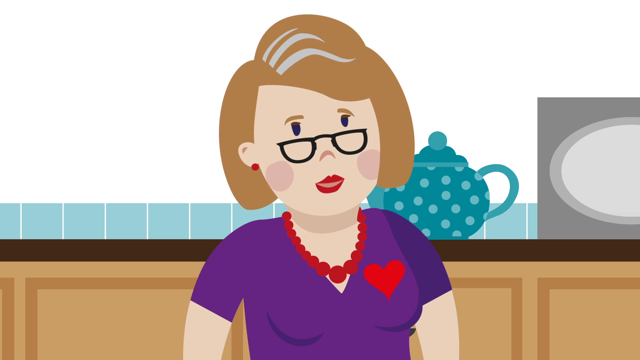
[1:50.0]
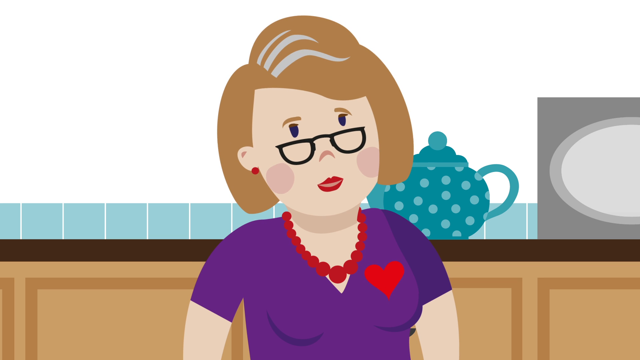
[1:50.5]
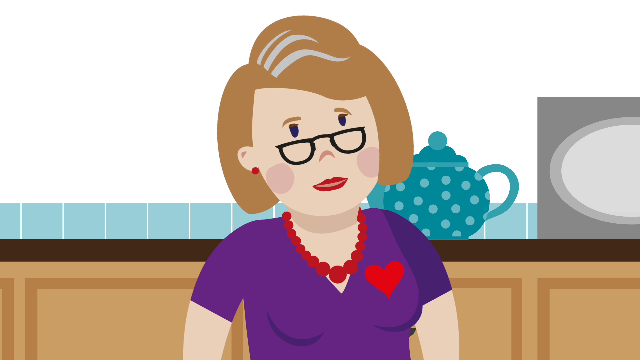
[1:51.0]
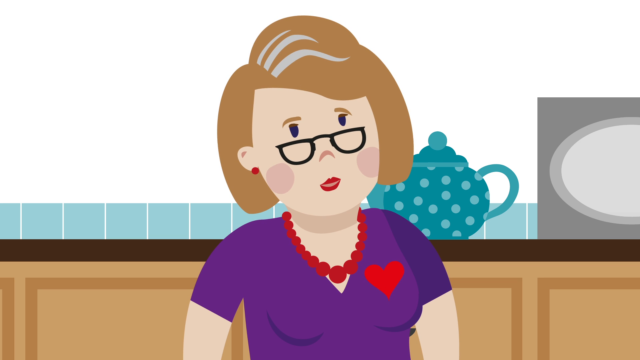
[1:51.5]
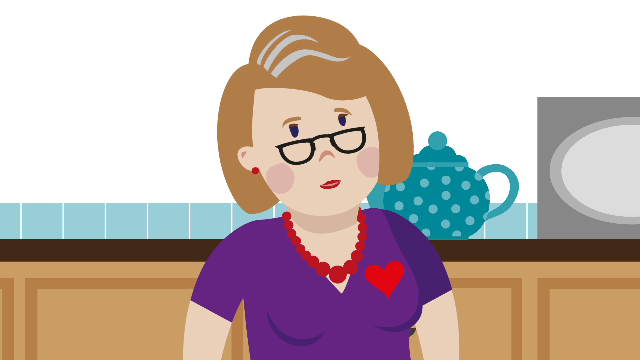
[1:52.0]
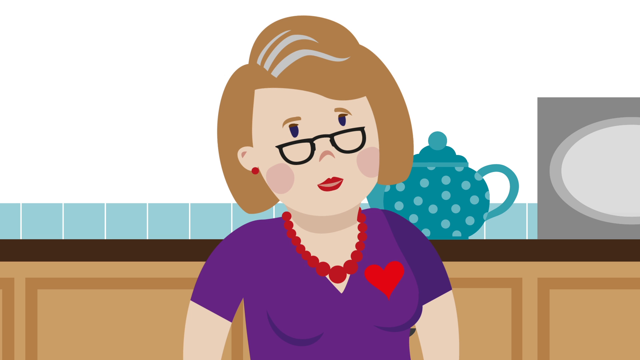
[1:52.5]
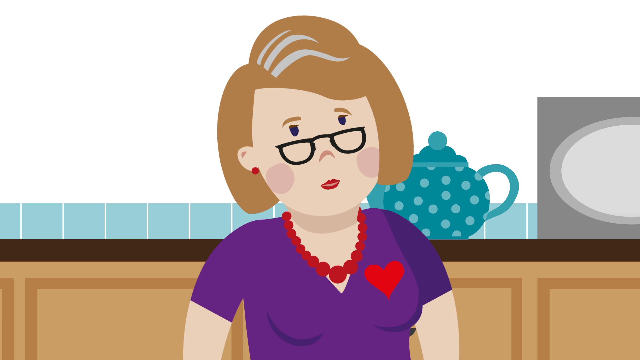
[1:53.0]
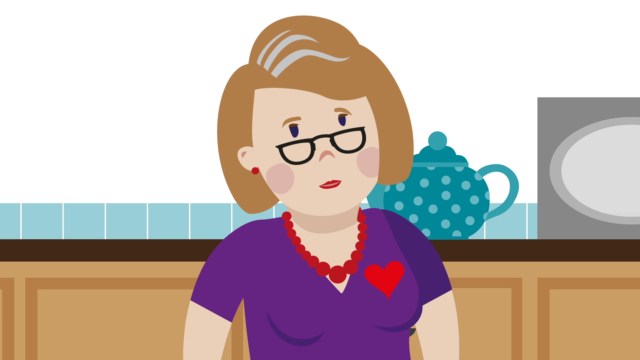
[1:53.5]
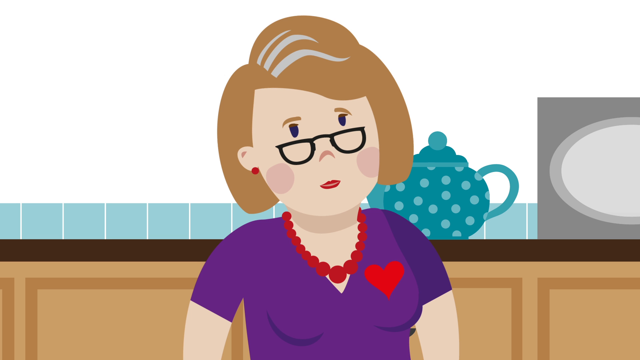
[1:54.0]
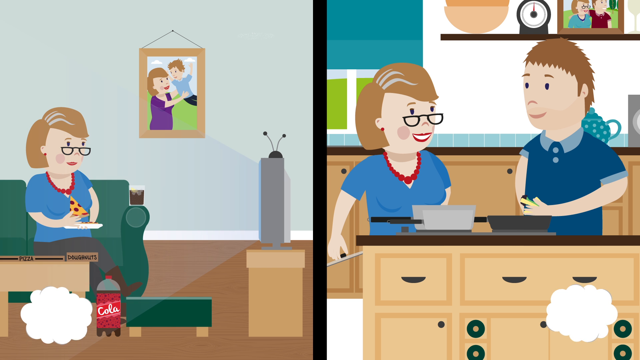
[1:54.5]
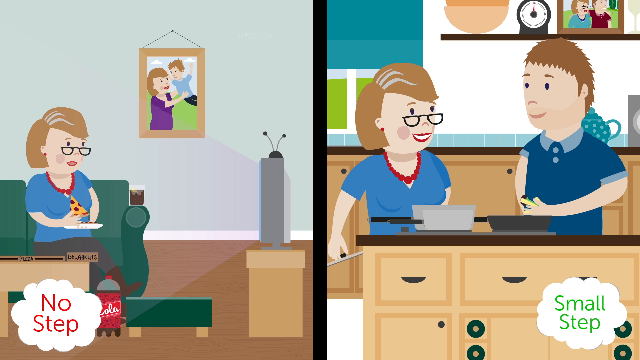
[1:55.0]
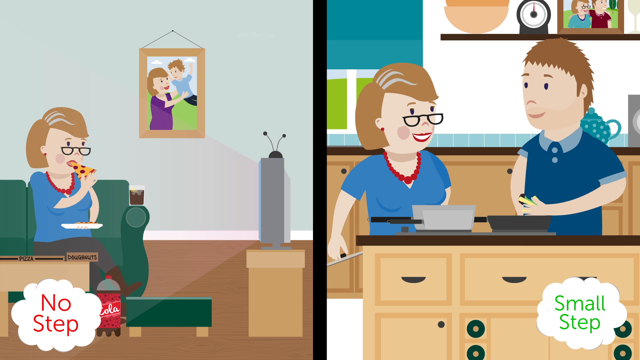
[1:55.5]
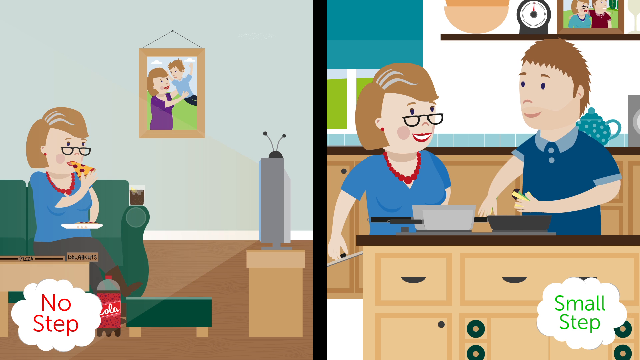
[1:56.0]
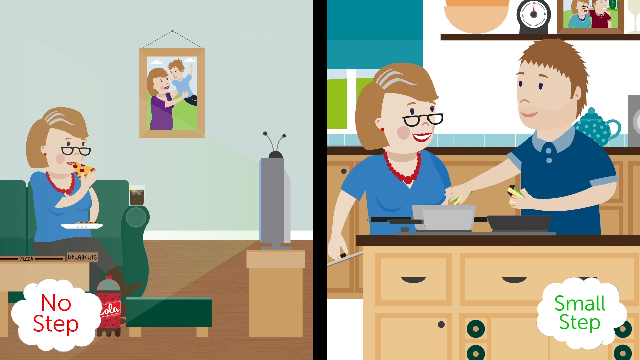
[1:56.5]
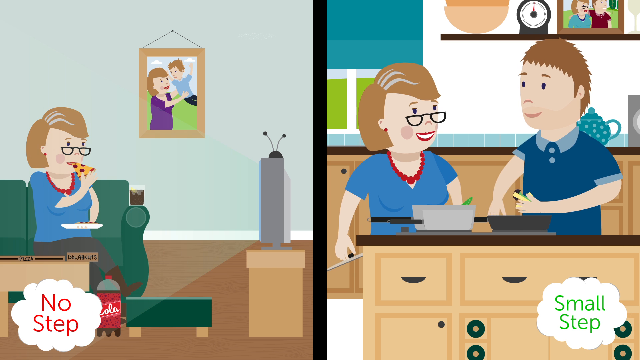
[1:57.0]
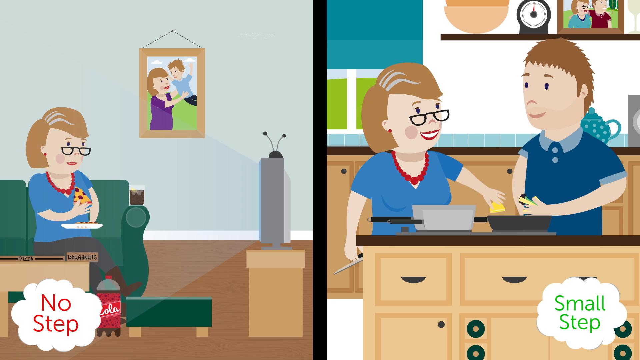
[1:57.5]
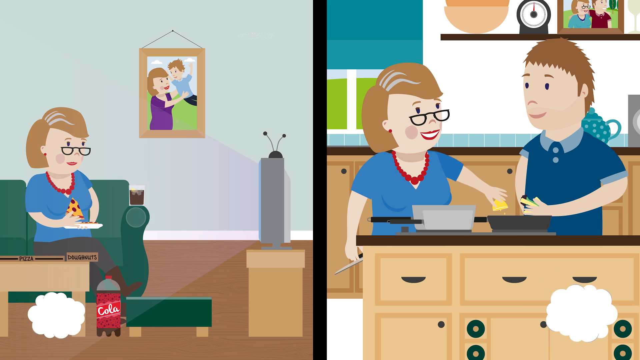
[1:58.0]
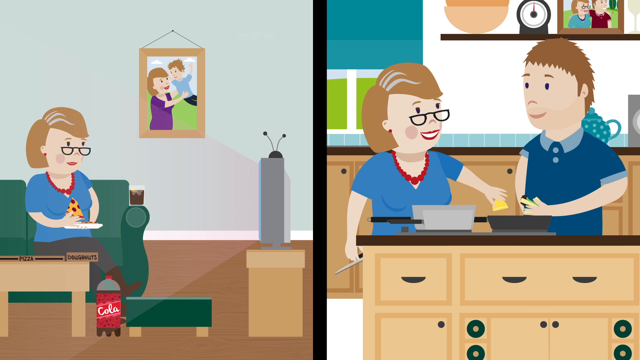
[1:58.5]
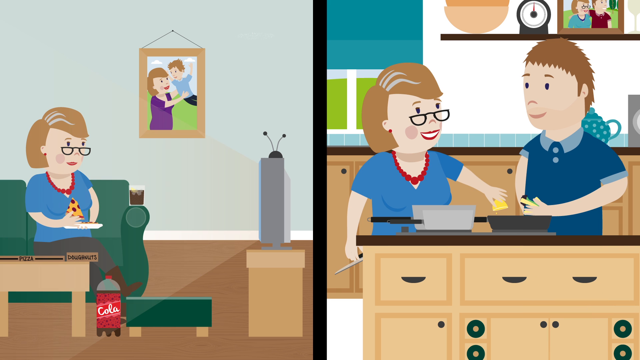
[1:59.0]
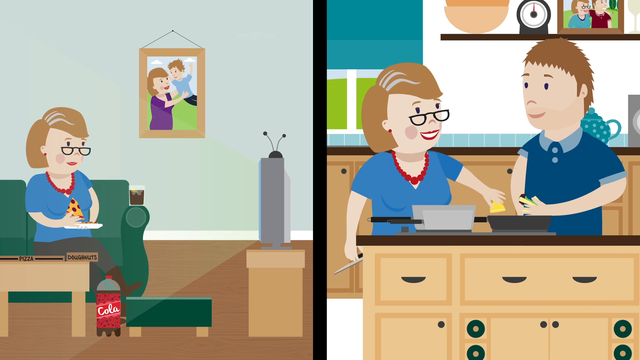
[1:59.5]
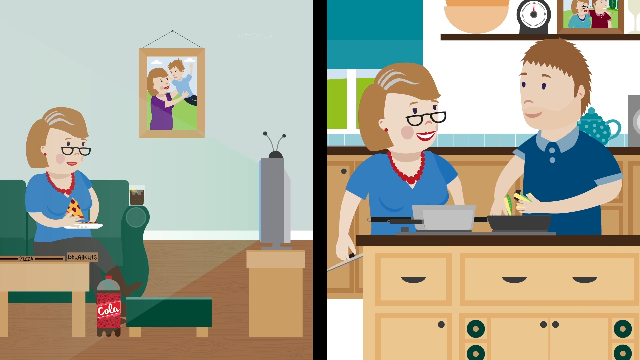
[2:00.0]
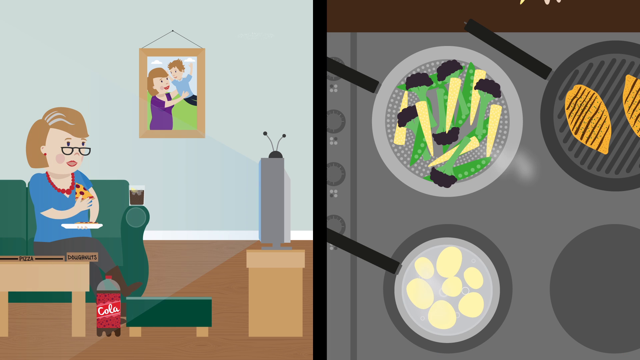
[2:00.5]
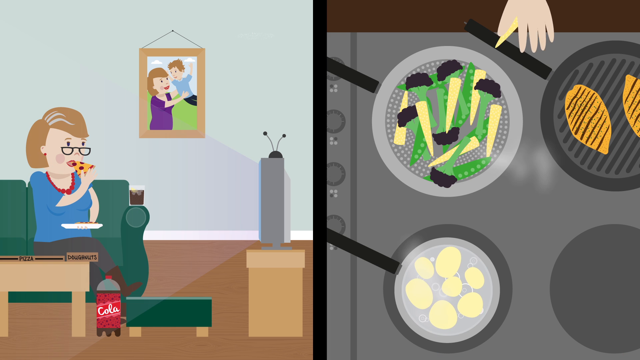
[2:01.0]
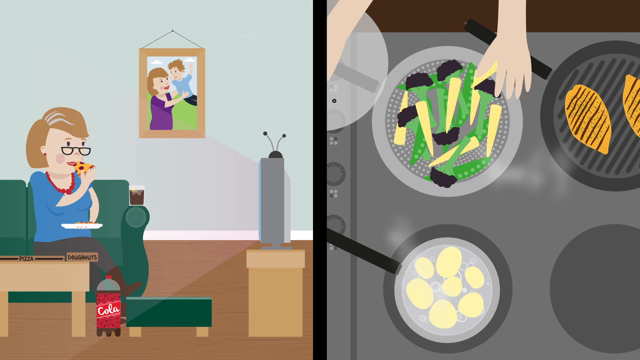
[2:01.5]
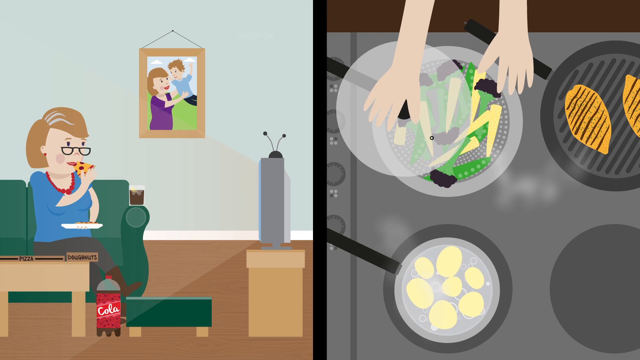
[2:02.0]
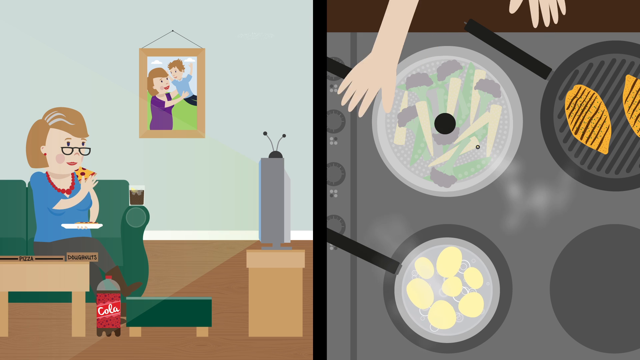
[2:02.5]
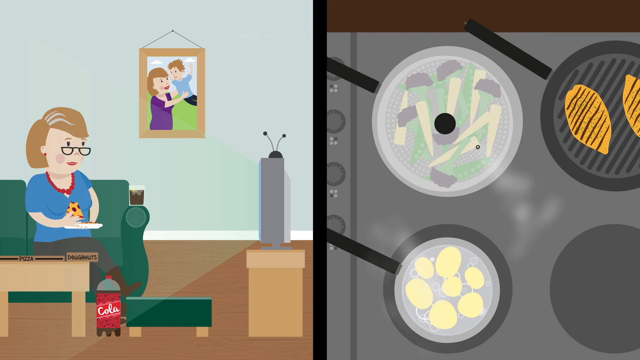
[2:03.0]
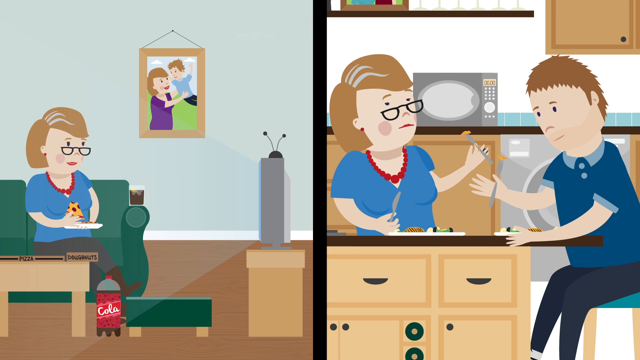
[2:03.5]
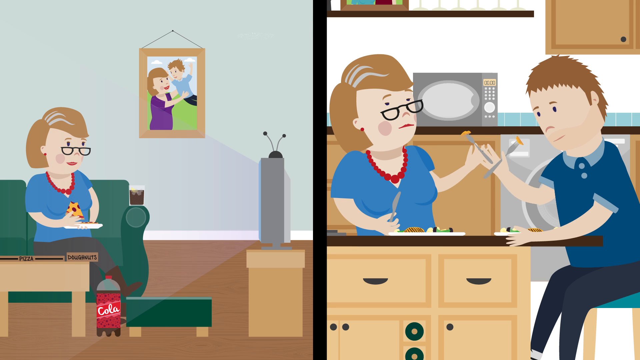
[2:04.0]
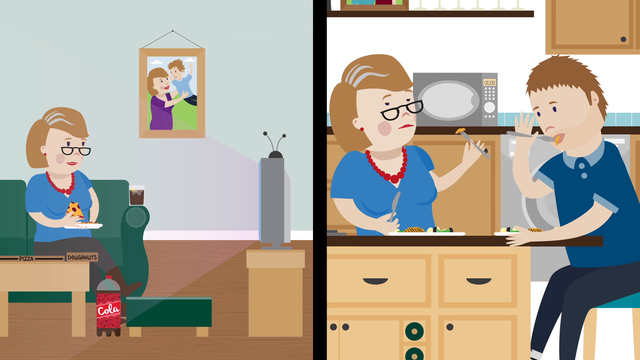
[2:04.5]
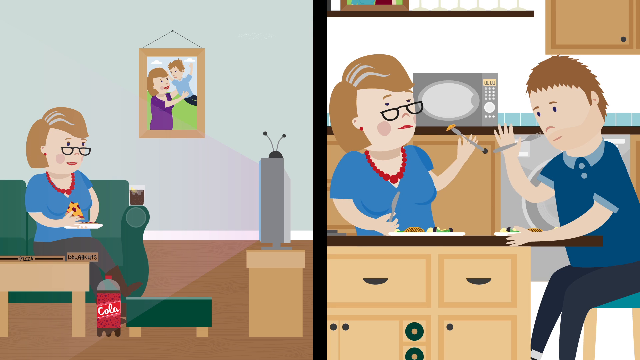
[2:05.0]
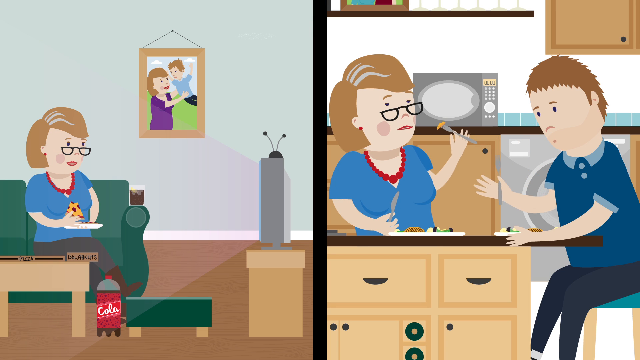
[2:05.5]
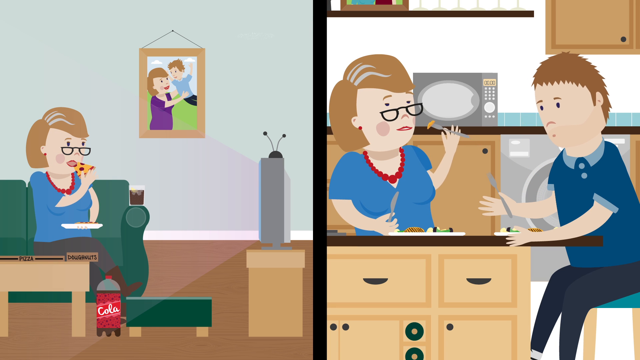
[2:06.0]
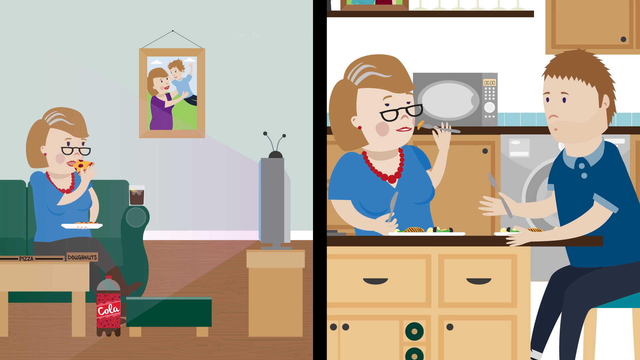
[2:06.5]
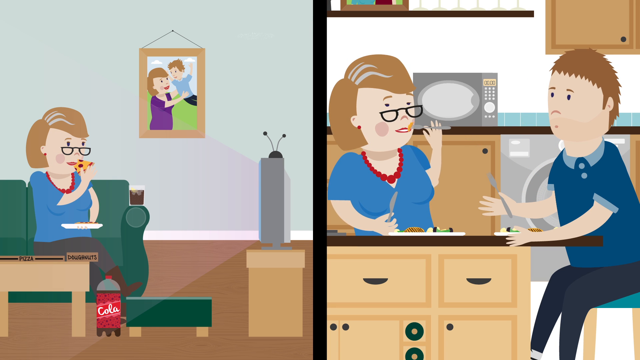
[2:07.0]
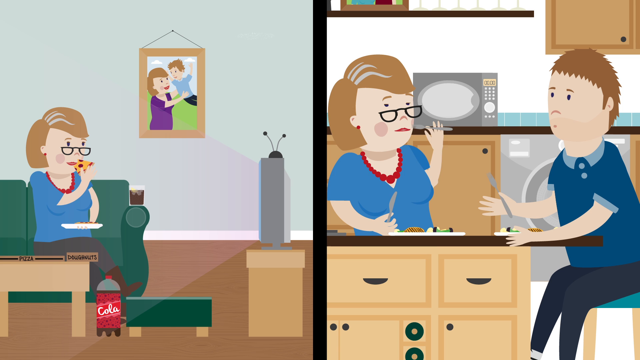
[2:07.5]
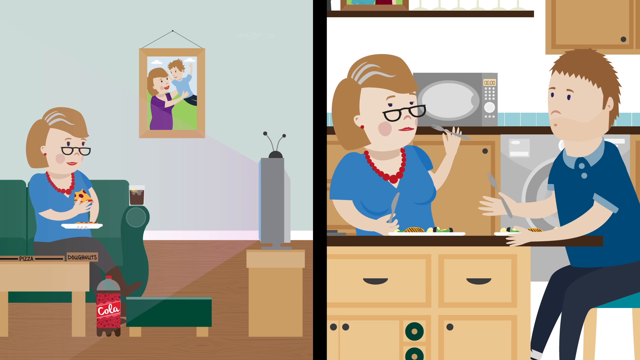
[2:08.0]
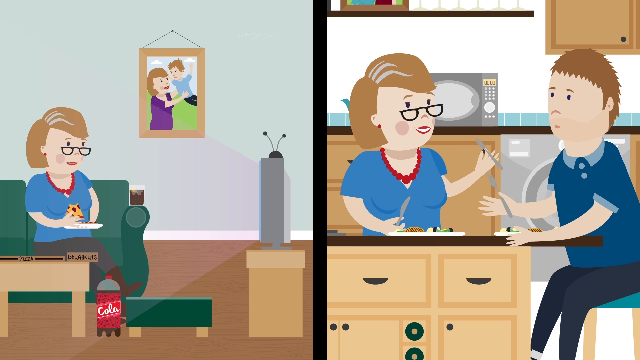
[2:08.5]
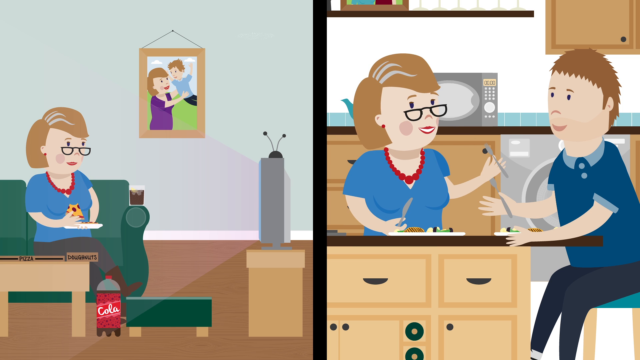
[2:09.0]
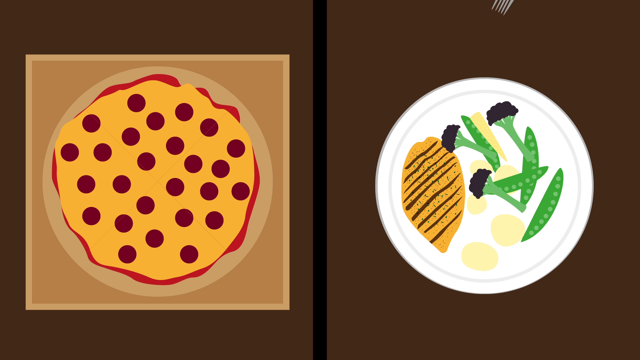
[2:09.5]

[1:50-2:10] The teacher or mom wears a purple dress with a red heart on the left side of the dress (the viewer's right), a red pearl necklace and dark-brown sunglasses, and has brown hair and red lipstick. Behind her are the teapot with blue and light blue dots, a little blue tile on the wall, white wall and half of a gray box, the microwave. The cabinet doors are light tan with a darker tan border. She looks at the camera and speaks to it. Next, the lady is sitting down in a blue dress, looking like she is eating pizza; she has brown hair and a red pearl necklace and sits on a green couch watching a TV, with a Coca-Cola bottle or prop bottle at the bottom and a green footstool. On the gray wall is a photograph of the woman in a purple dress holding up a child in a blue shirt, possibly the same child. On the TV-watching side, "no step" appears in a little cloud. On the right side, "small step" appears in green letters in a little cloud bubble, and the lady is in the kitchen with a scale, a photograph, white walls, blue tile, brown cabinets, two pots or pans on the stove and another on the right side. A boy wears a dark blue shirt with light blue underneath, and part of the teapot is visible, light blue or light green with little dark blue dots. The right-side animation shows food being cooked, such as eggs and maybe broccoli, and then sitting down and eating. The microwave in the background shows what looks like vegetables.